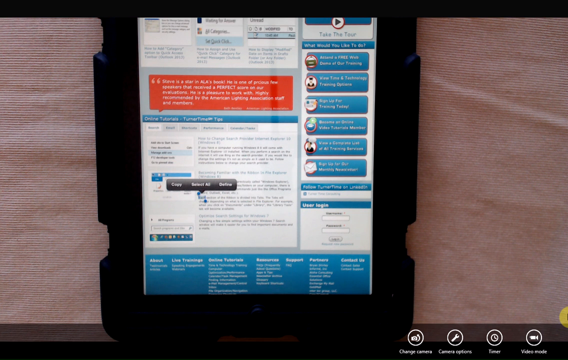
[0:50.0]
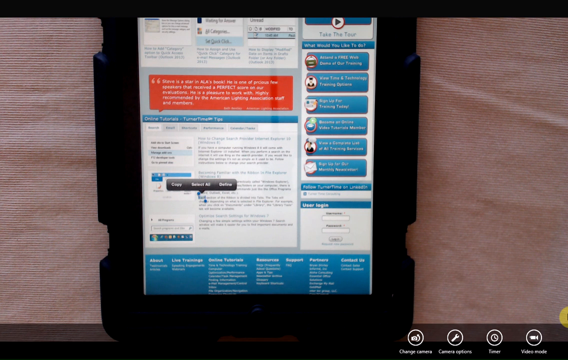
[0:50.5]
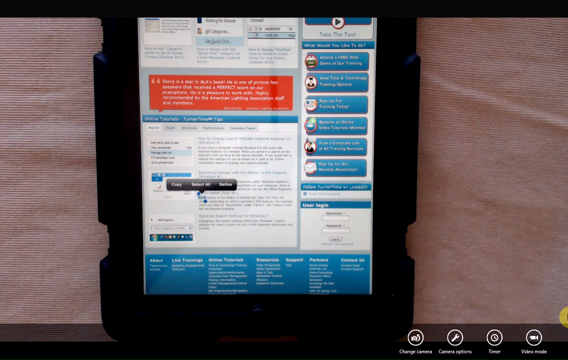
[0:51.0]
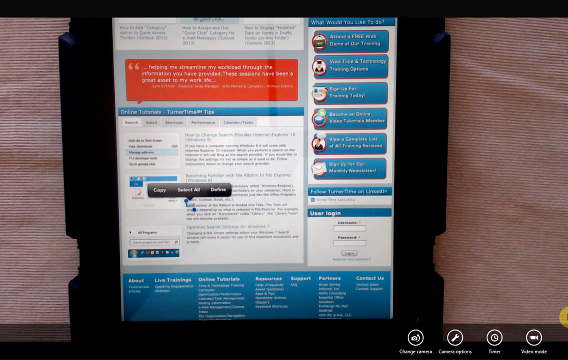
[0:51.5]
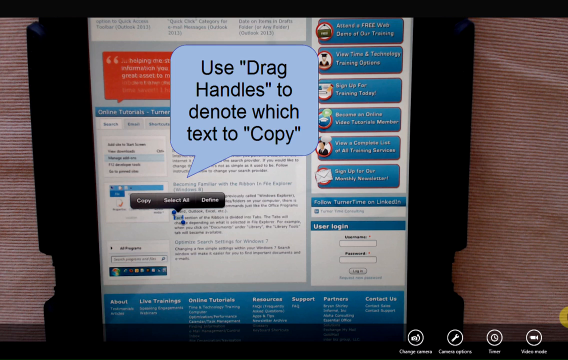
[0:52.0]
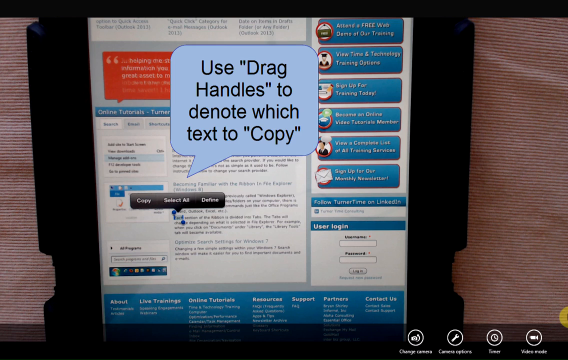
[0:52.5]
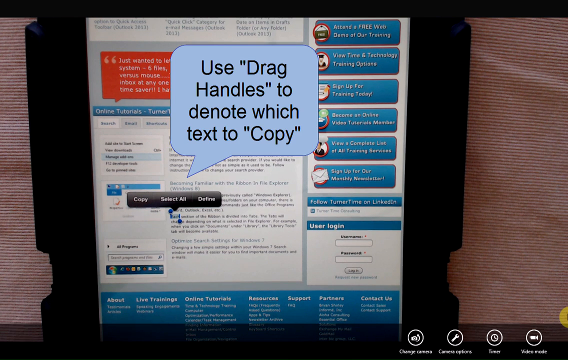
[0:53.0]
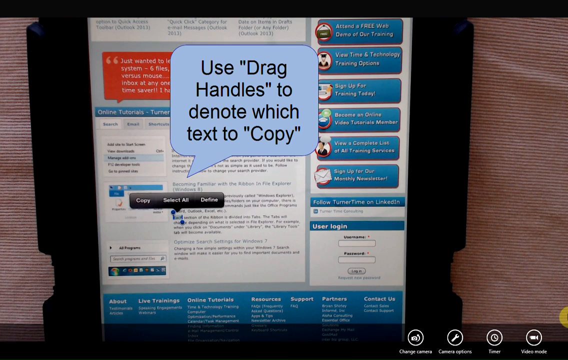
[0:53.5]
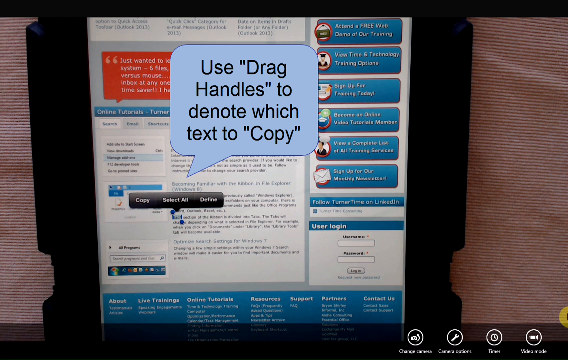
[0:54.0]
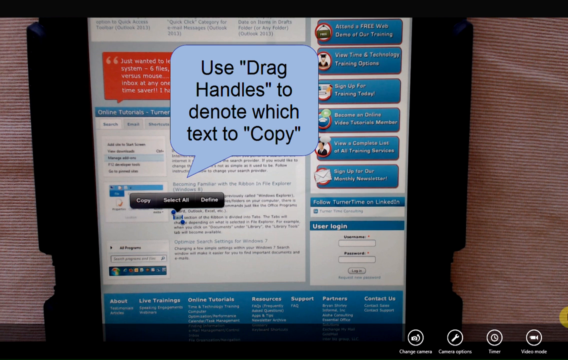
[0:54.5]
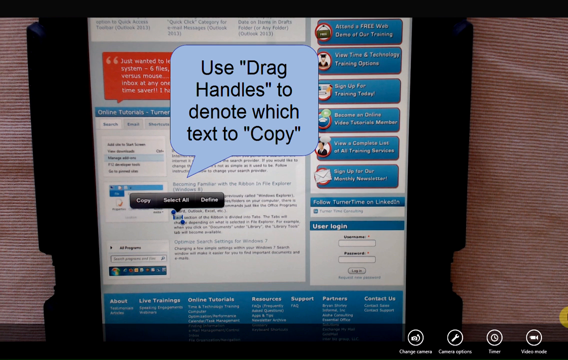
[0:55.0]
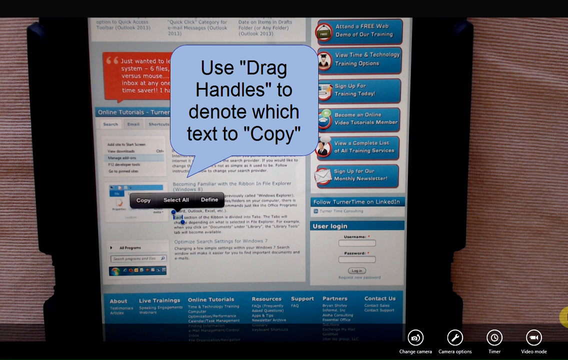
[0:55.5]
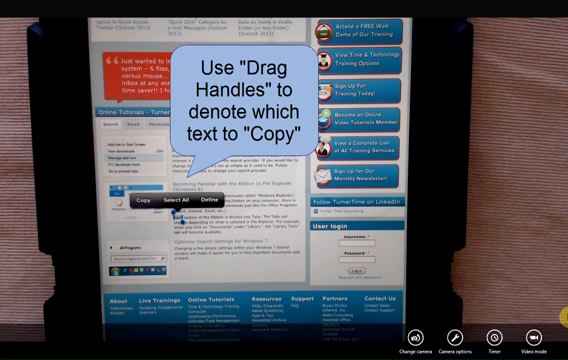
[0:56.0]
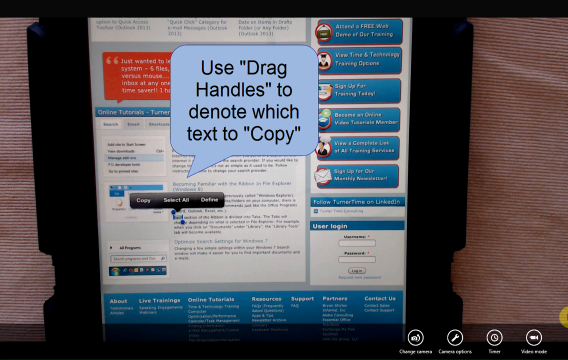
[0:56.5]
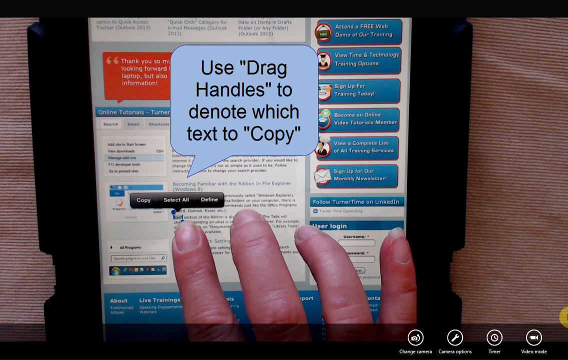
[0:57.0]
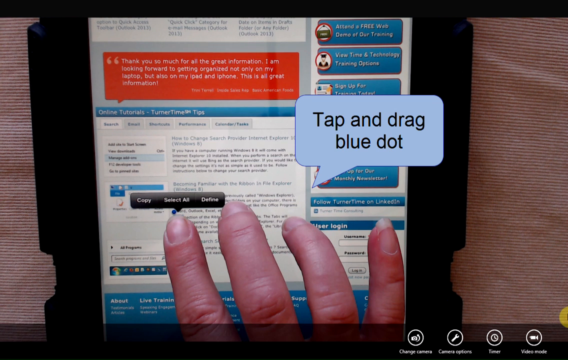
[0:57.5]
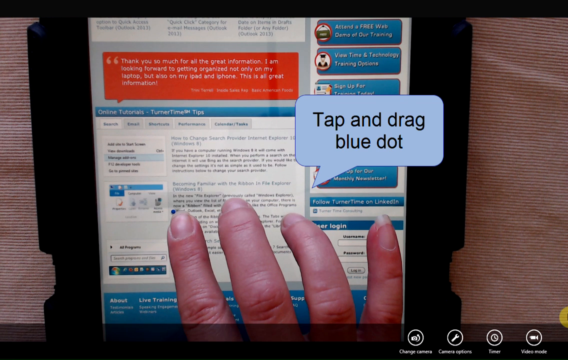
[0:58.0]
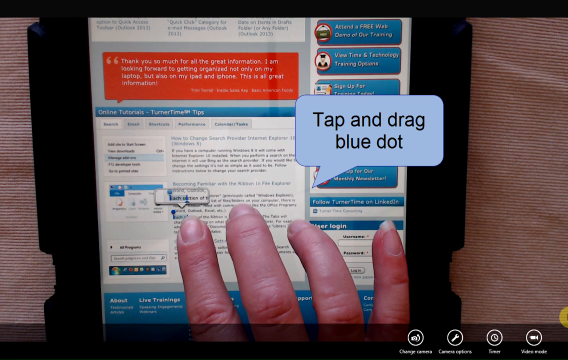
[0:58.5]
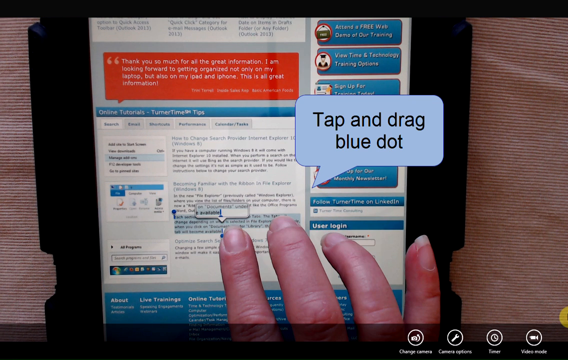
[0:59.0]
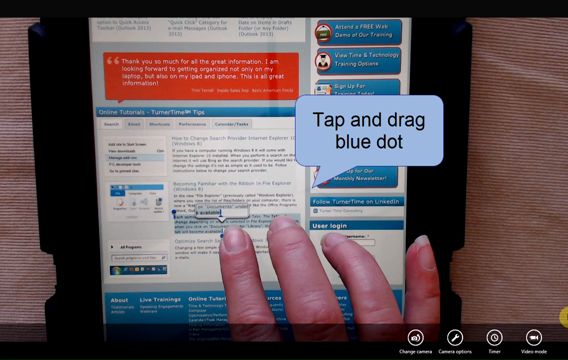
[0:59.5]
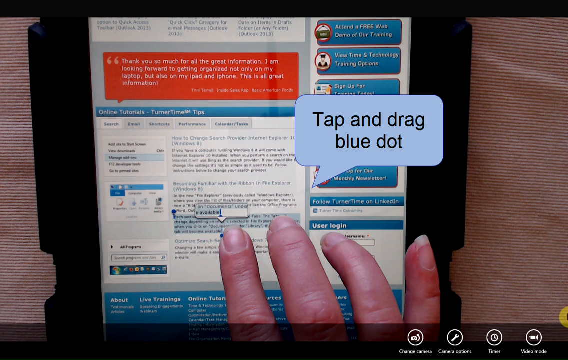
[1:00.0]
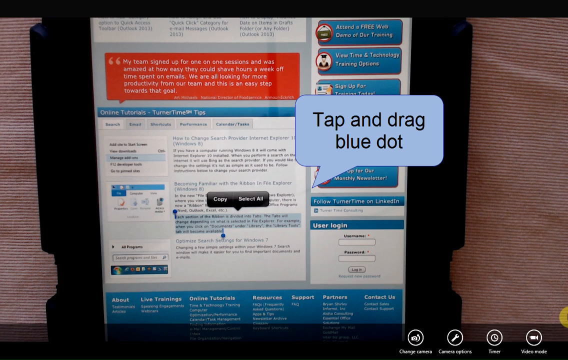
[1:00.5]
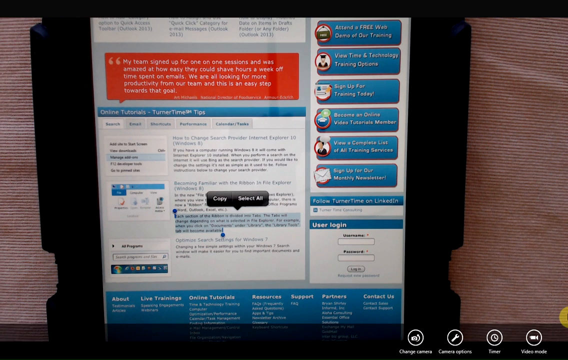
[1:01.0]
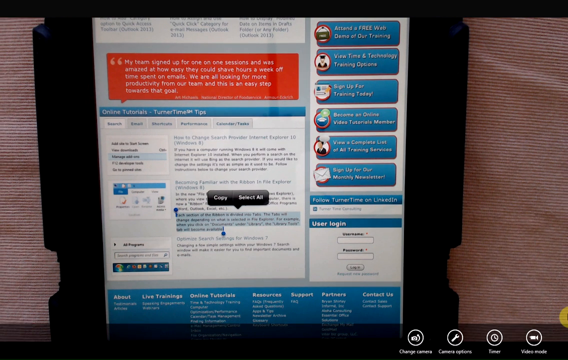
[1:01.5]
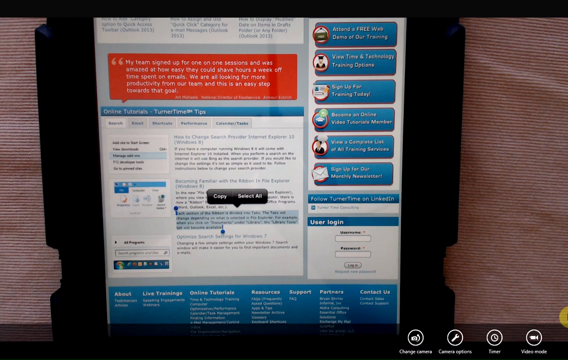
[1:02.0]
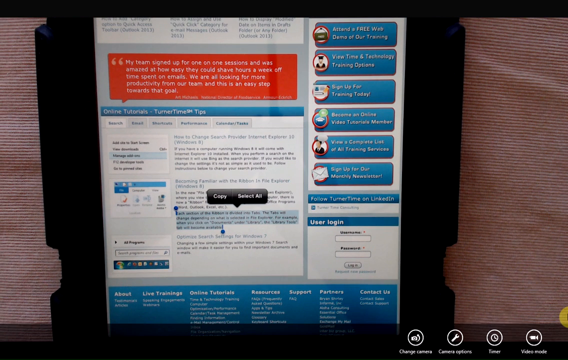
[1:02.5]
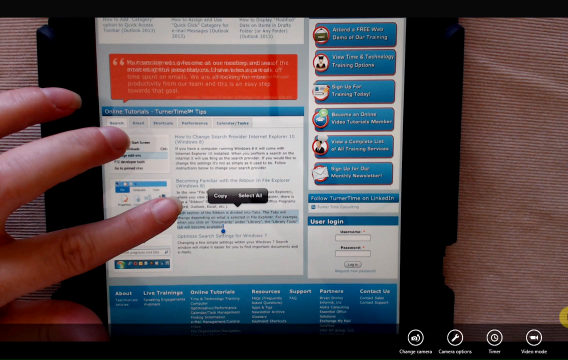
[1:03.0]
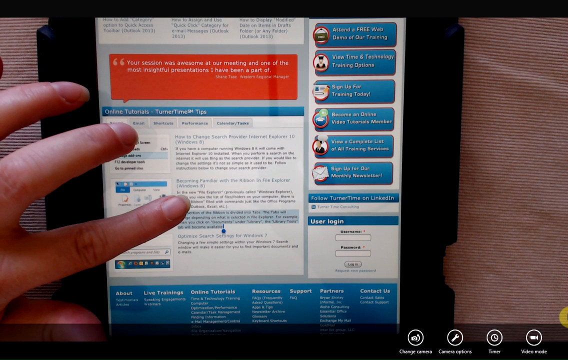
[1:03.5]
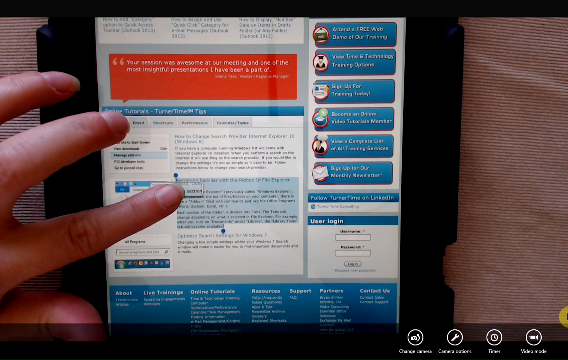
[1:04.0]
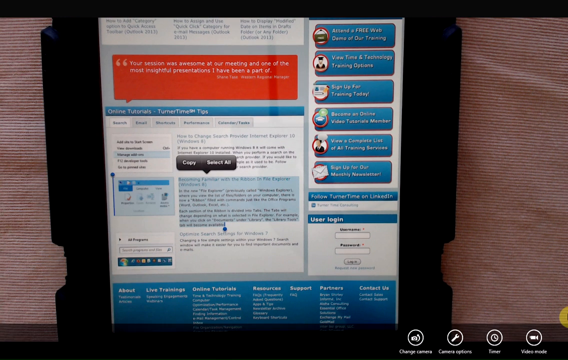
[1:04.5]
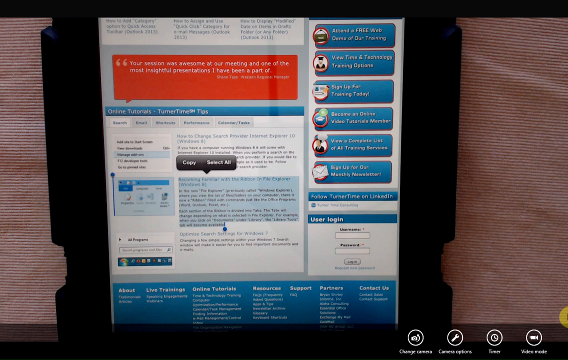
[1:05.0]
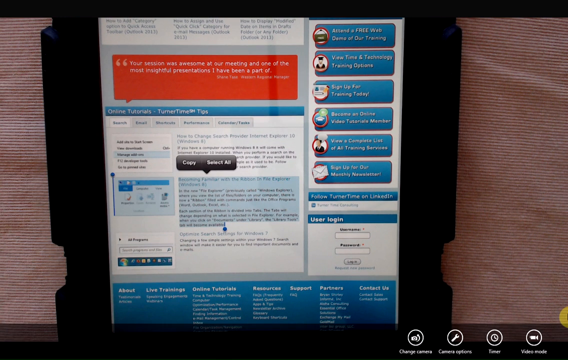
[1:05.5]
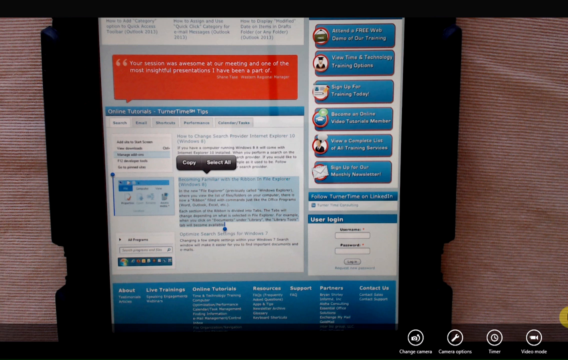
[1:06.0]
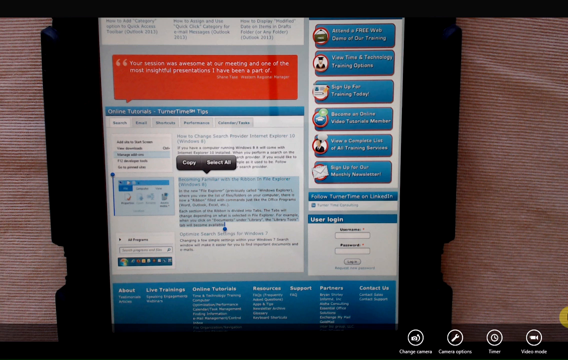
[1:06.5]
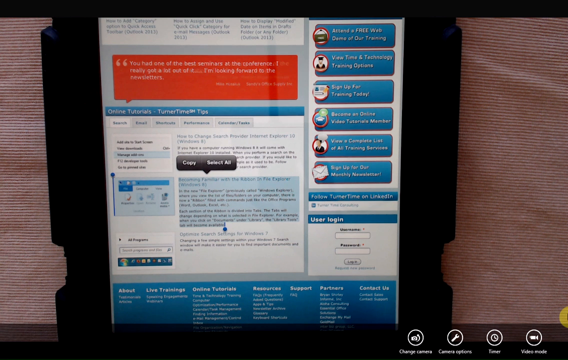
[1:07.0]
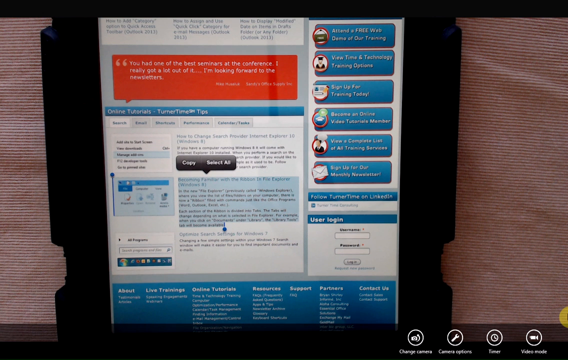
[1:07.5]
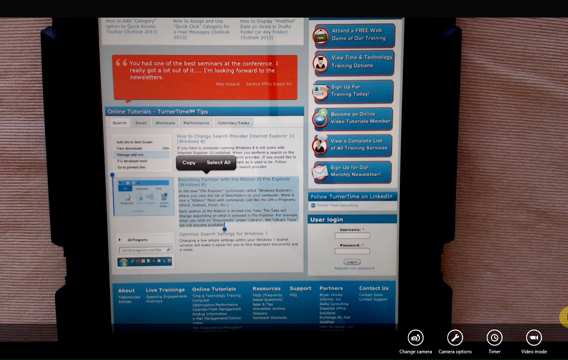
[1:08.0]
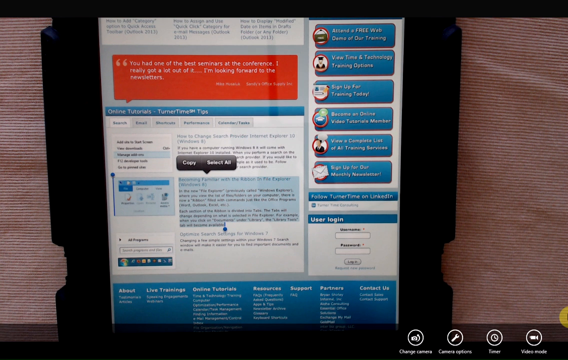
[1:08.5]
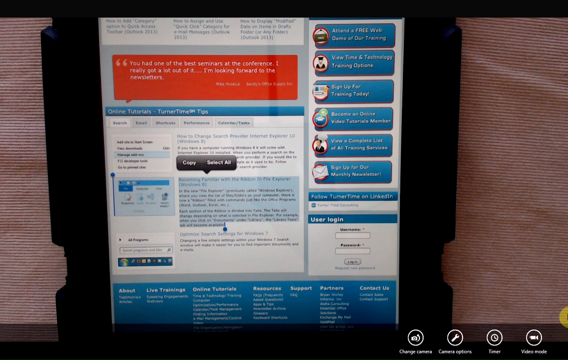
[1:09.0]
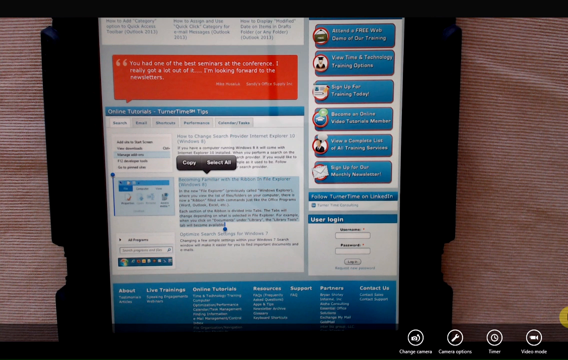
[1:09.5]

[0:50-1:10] A text overlay appears. The selected word is "each," and options for copy, select all and define are shown. A speech bubble over this says "use the drag handles to denote which text to copy." At each end of the selection there are blue bars; the one on the left has a circle above it and the one on the right has a circle below it. A person's hand appears, looking like an addition made in Photoshop or something similar, with lighting that does not match. Text says "tap and drag the blue dot." A paragraph is then selected, with the other blue dot dragged out, and text says "tap copy."